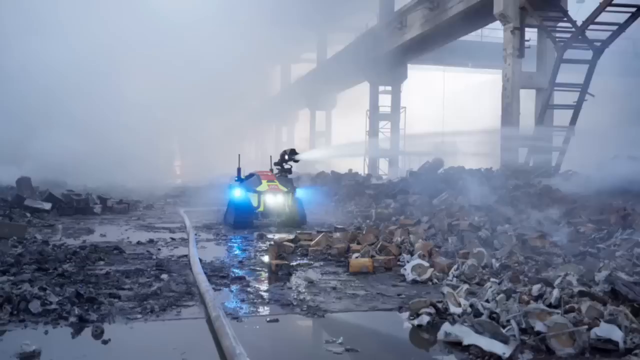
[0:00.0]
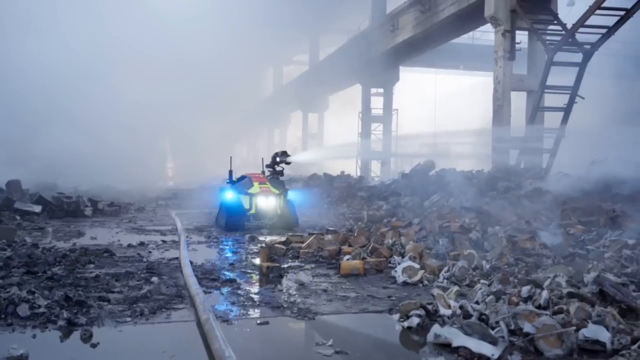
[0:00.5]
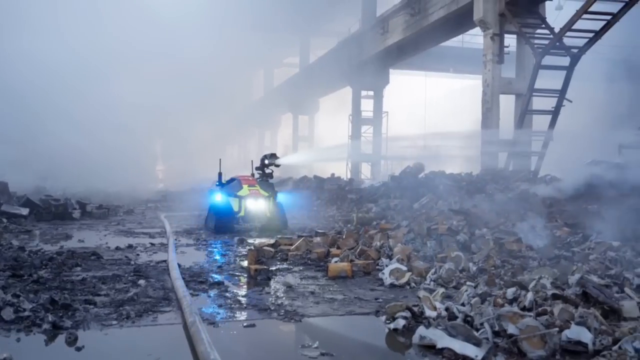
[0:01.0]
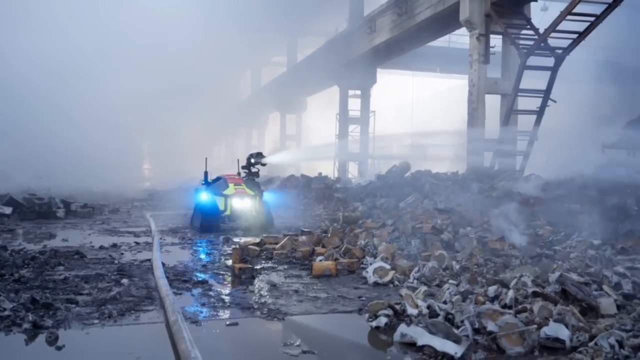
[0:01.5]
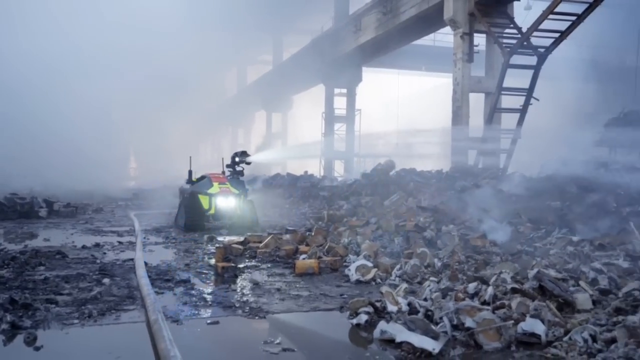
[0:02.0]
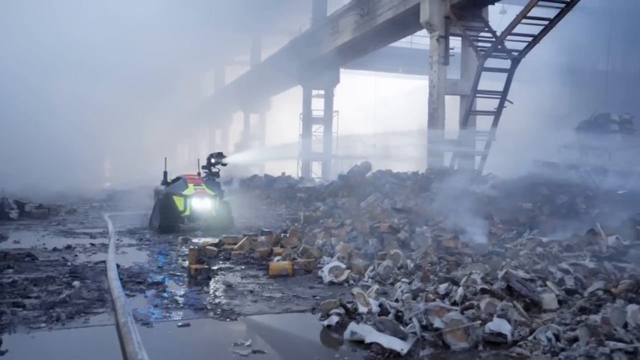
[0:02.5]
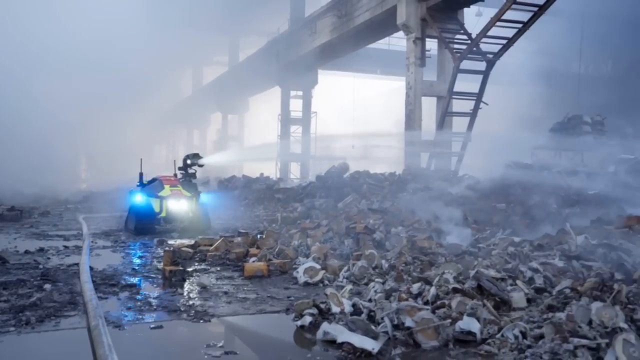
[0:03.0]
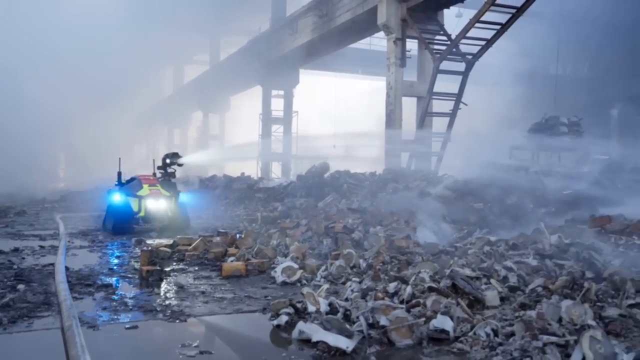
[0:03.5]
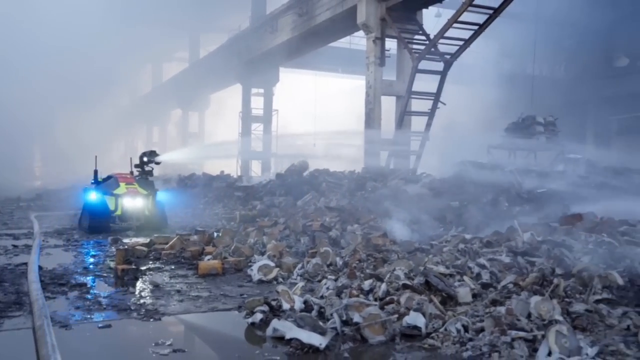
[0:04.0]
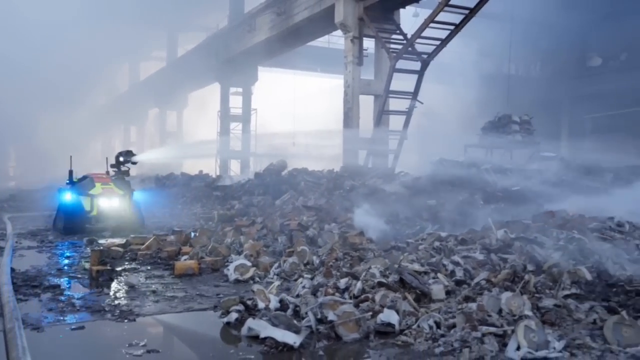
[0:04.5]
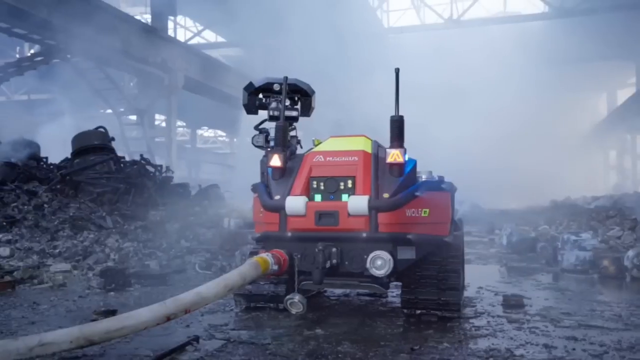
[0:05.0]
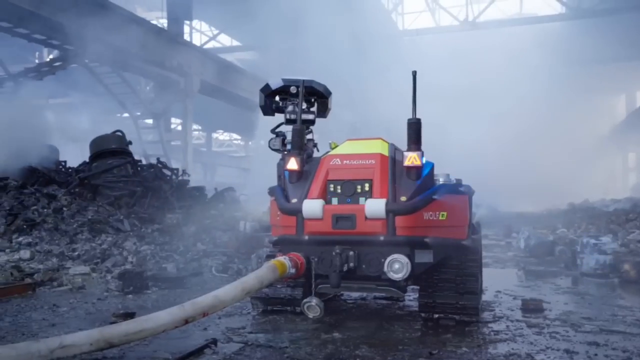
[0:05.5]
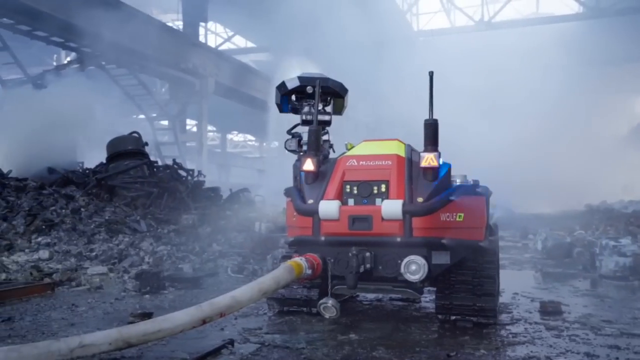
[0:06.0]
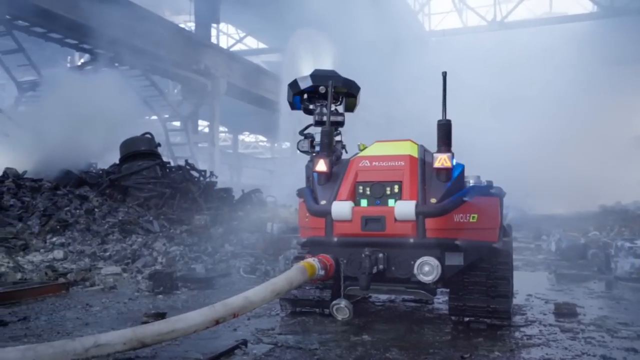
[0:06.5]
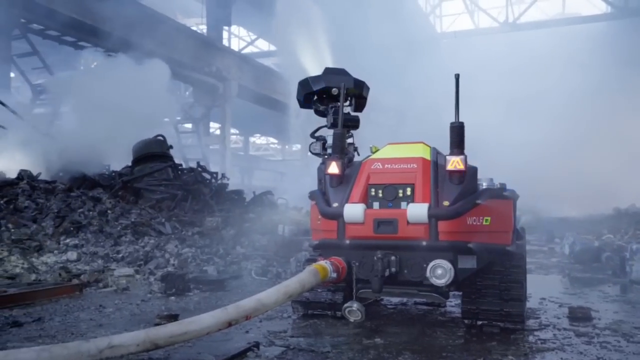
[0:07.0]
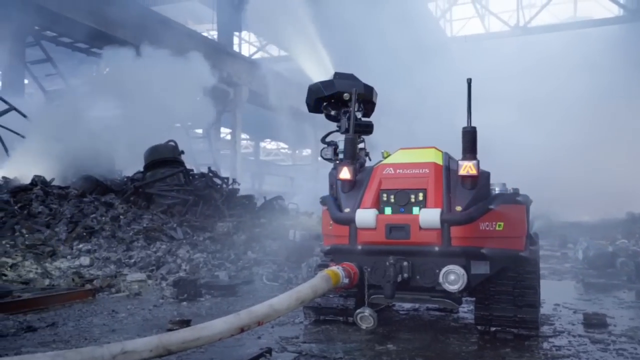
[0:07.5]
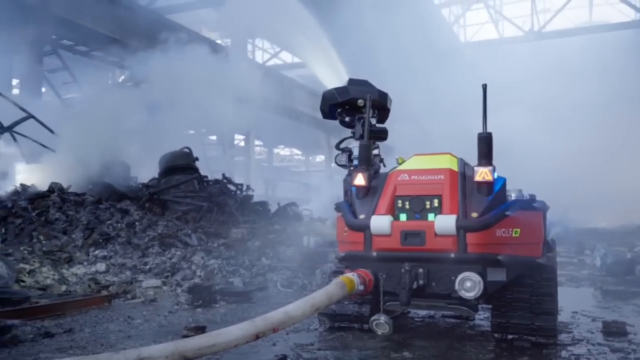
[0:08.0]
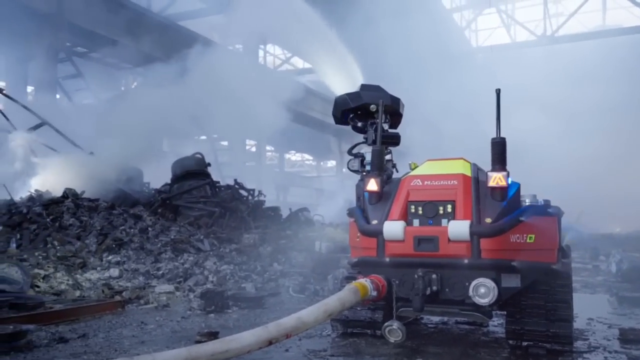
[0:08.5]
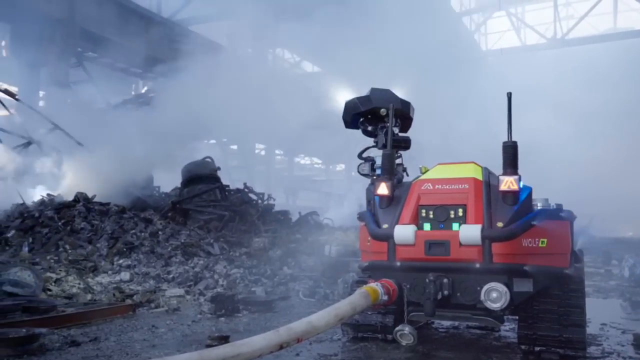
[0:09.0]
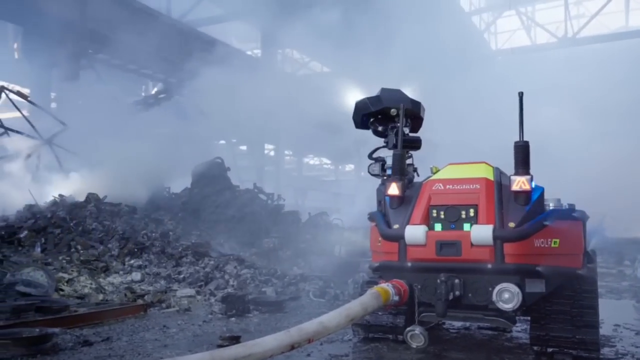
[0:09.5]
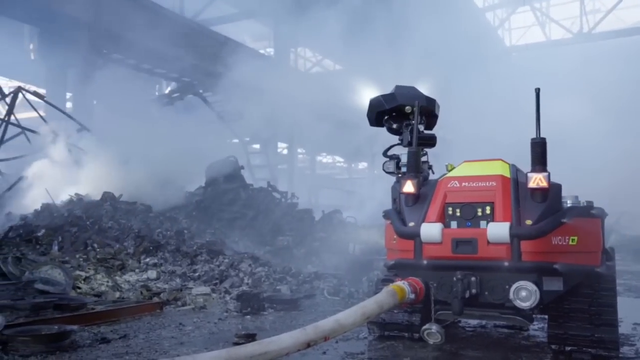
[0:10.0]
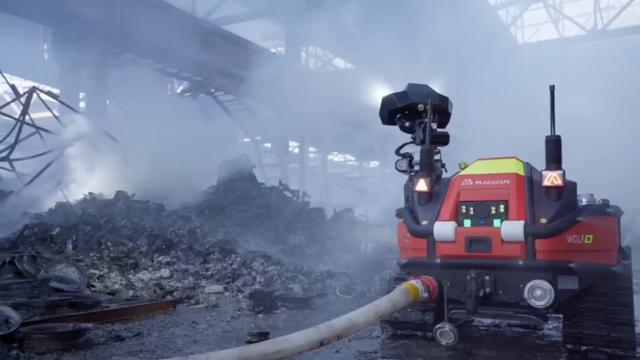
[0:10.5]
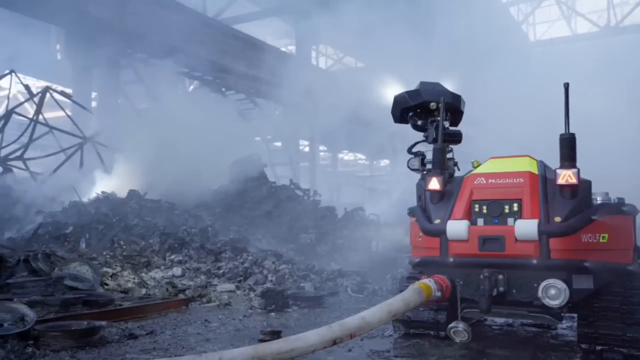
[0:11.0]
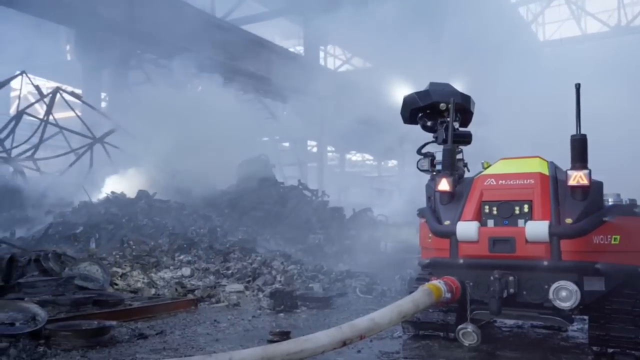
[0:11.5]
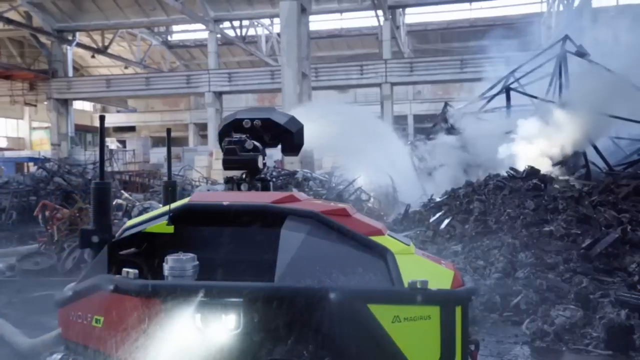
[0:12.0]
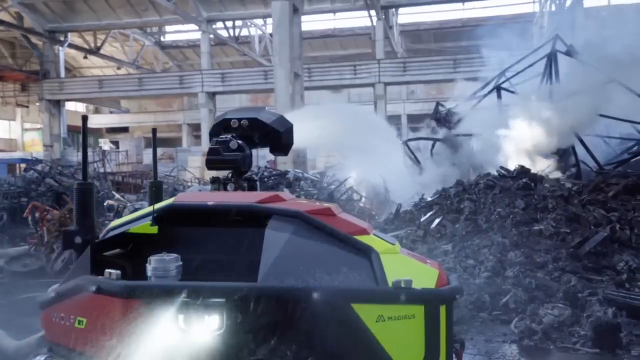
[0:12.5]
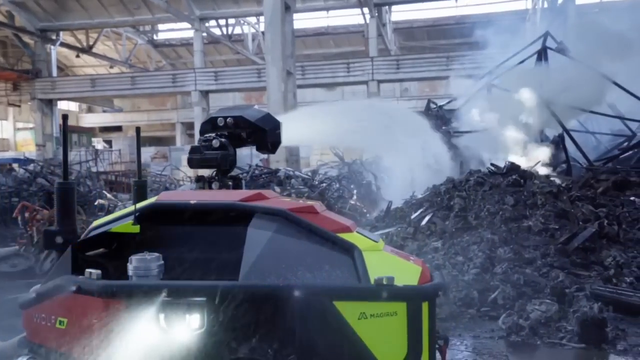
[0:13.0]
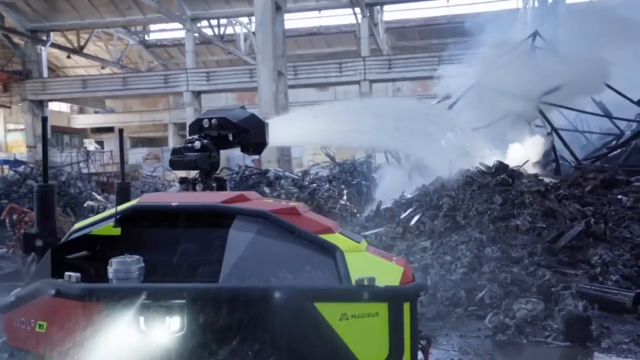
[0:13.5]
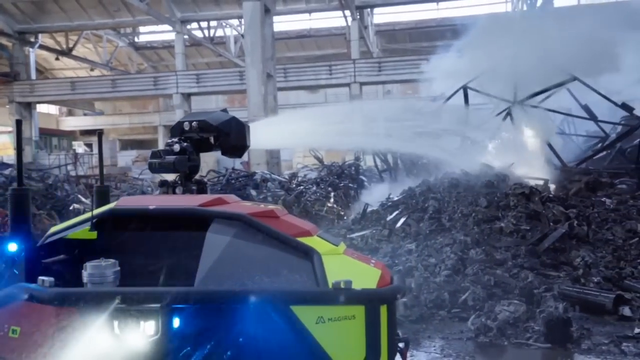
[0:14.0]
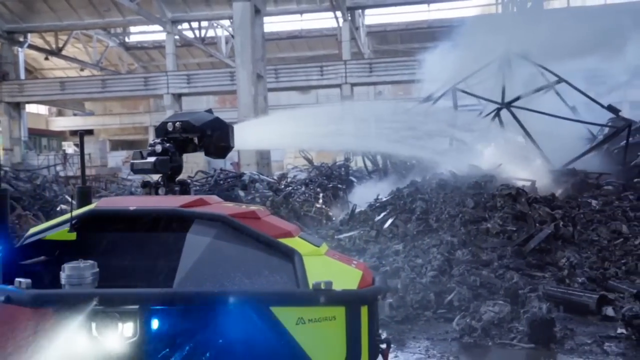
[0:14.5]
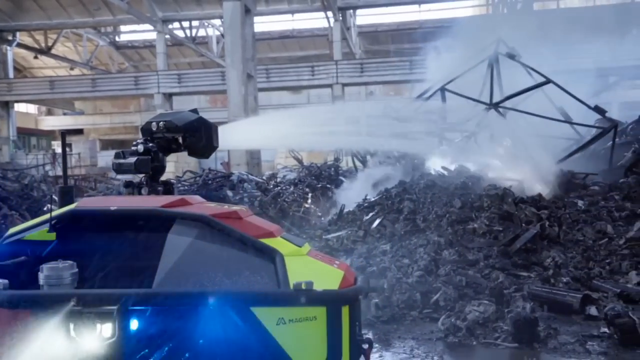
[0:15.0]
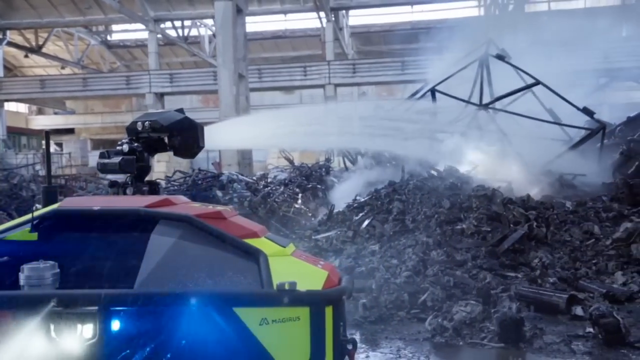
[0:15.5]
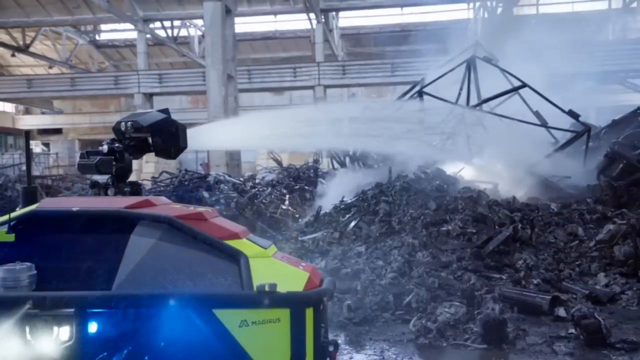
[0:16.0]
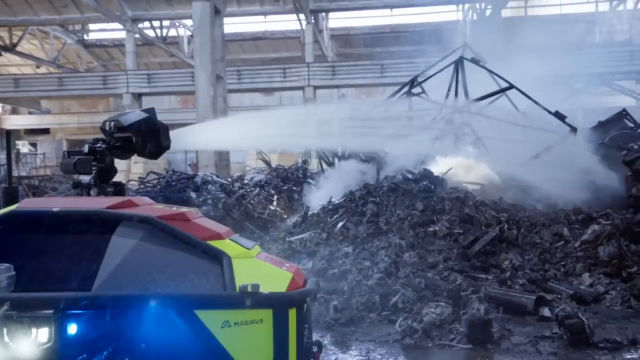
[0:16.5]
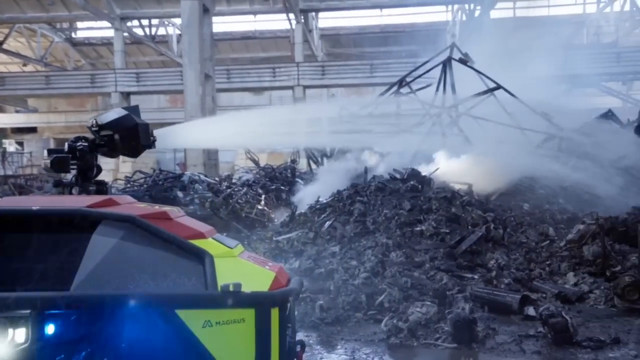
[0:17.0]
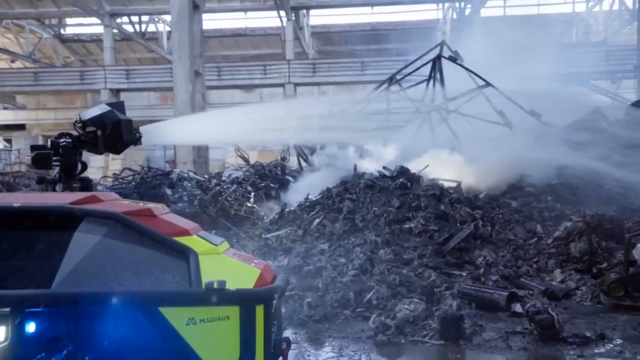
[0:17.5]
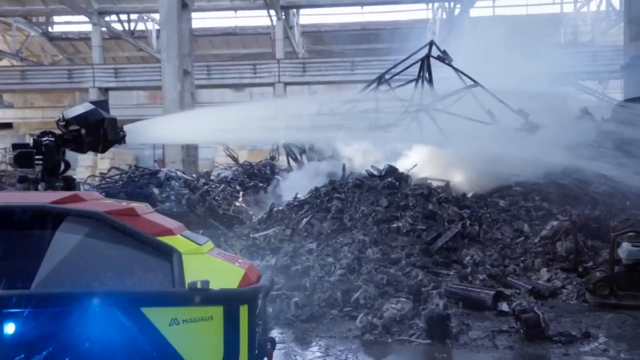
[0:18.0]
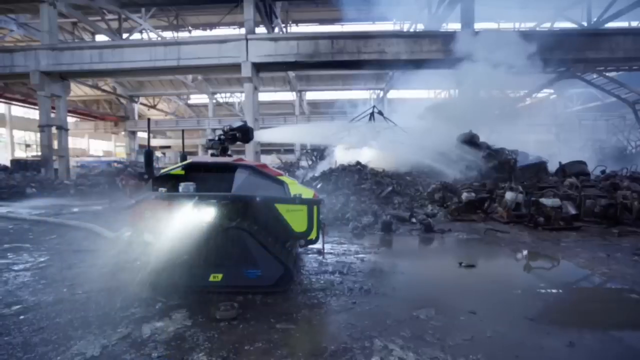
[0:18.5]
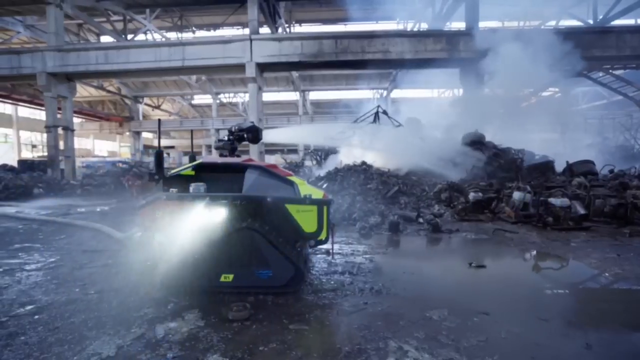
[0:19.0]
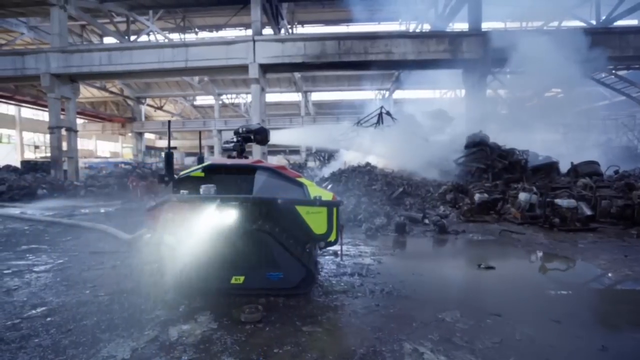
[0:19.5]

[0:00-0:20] What looks like a tiny vehicle with a hose attached to it seems to be putting out a fire, with what looks like debris all around. The location is unclear; there are some structures that look like a bridge, and the site could be an industrial one. Some flame rises from the debris, though the fire seems to have just been put out, leaving the remains of whatever structure or items caught fire. The place is quite wet, and what looks like a power hose sprinkles water around the area. The tiny vehicle has blue lights, which are flashing, and what is probably some antenna at the back. The scene is quite cloudy.